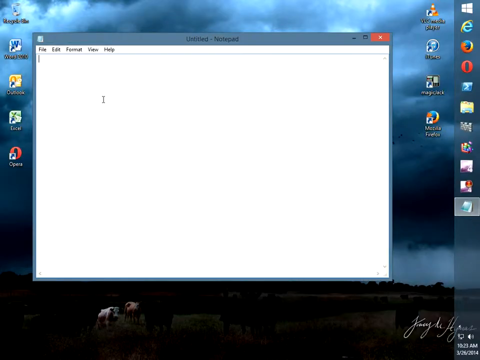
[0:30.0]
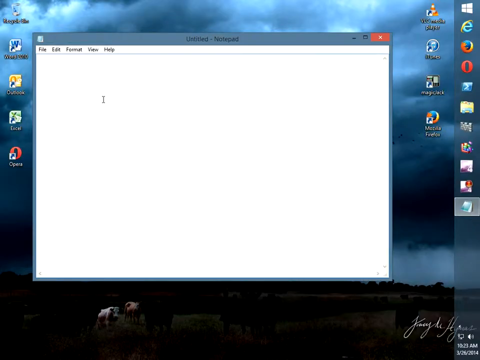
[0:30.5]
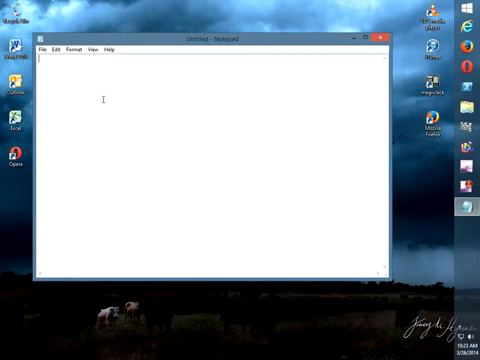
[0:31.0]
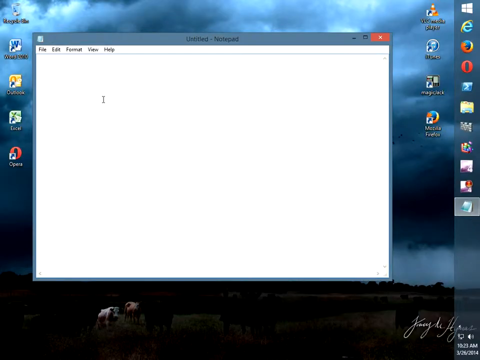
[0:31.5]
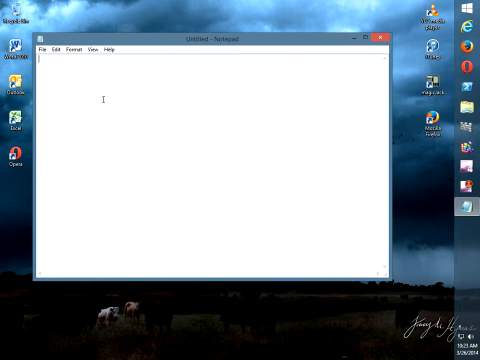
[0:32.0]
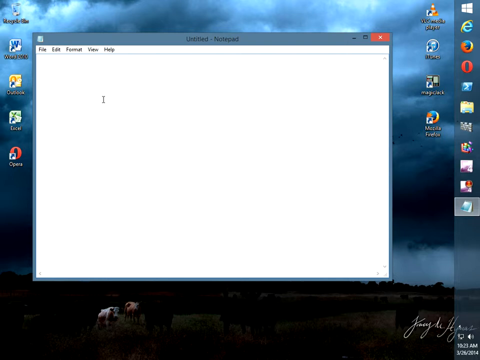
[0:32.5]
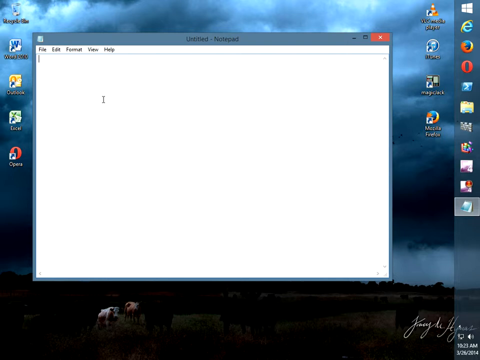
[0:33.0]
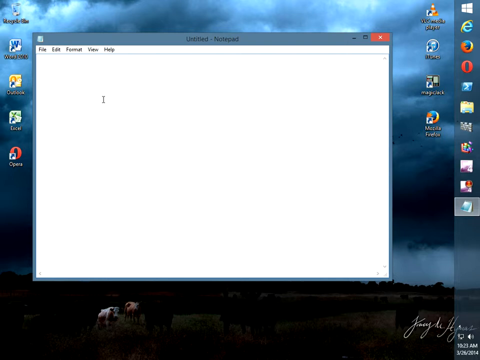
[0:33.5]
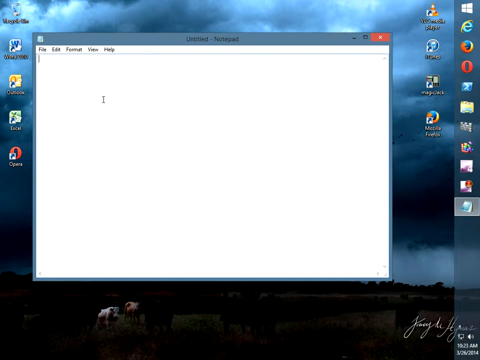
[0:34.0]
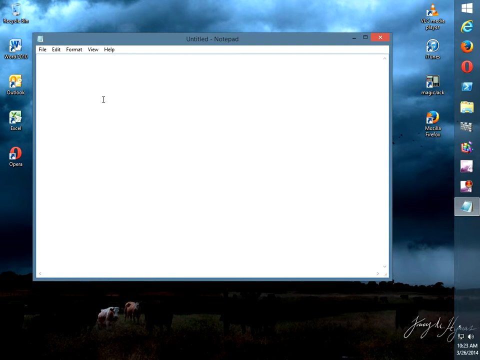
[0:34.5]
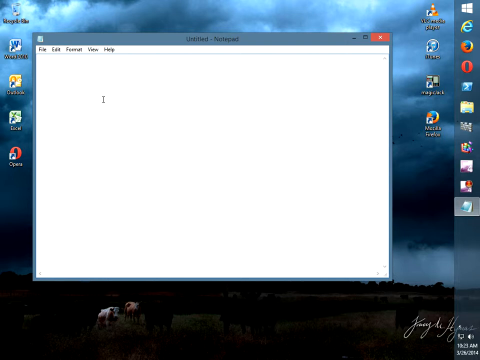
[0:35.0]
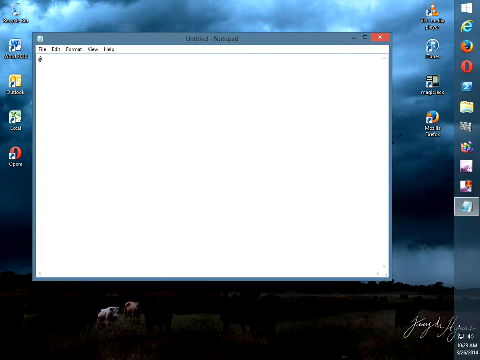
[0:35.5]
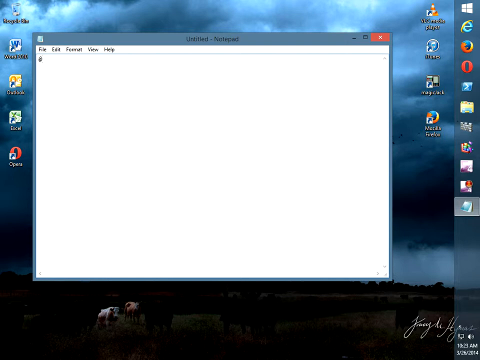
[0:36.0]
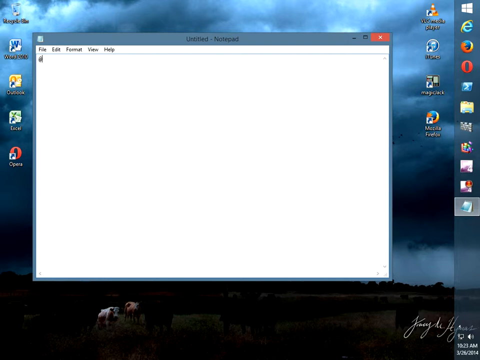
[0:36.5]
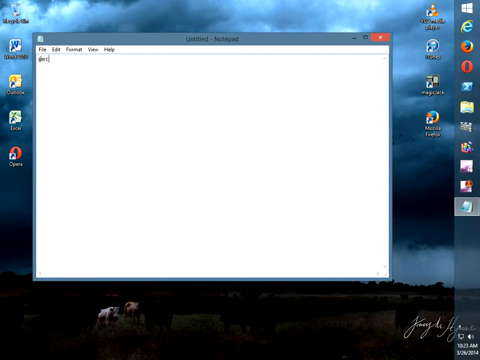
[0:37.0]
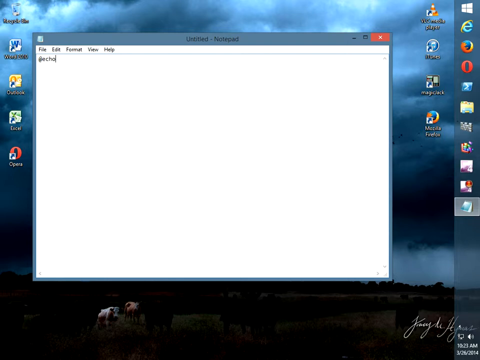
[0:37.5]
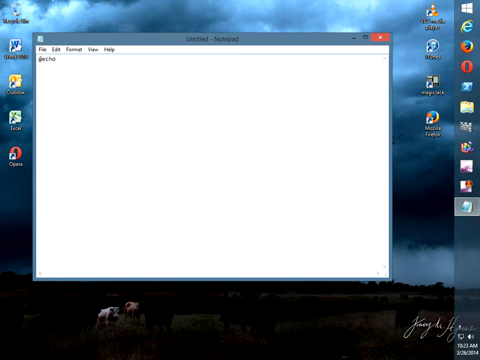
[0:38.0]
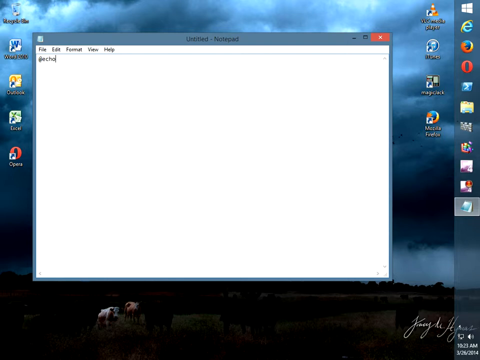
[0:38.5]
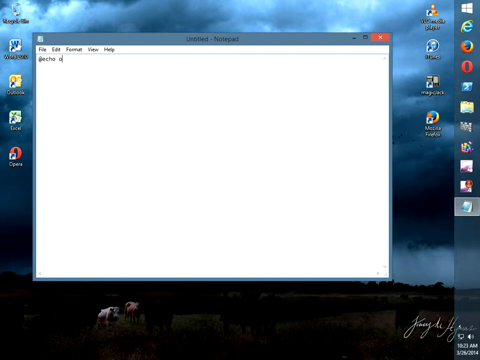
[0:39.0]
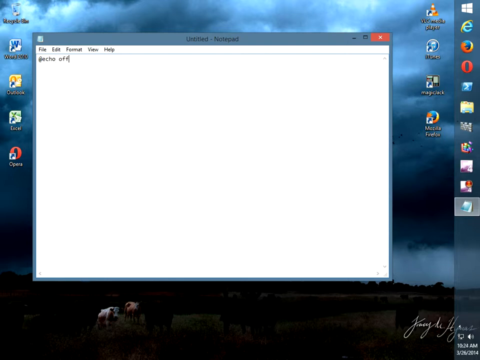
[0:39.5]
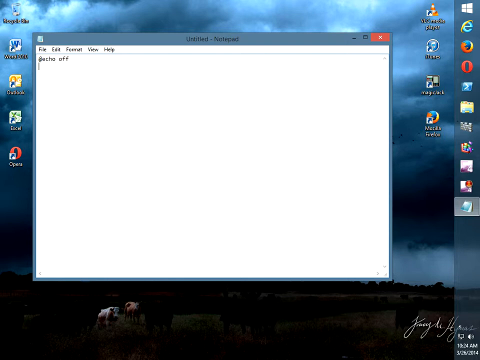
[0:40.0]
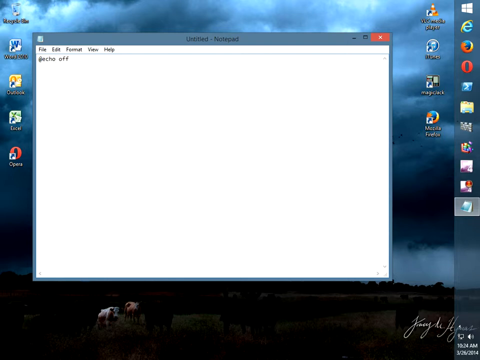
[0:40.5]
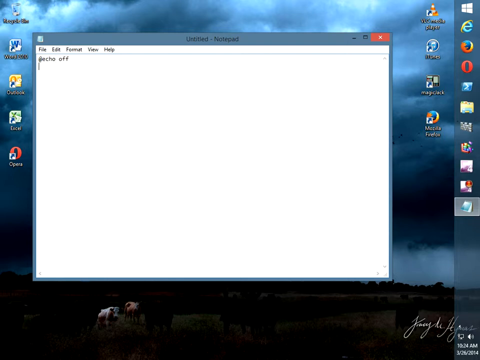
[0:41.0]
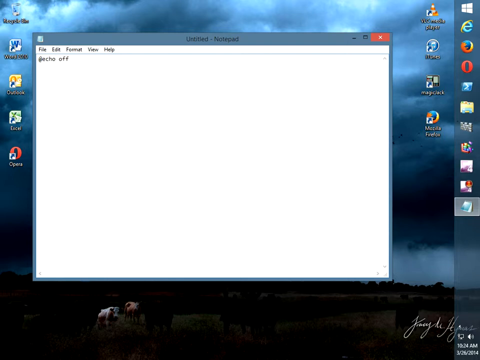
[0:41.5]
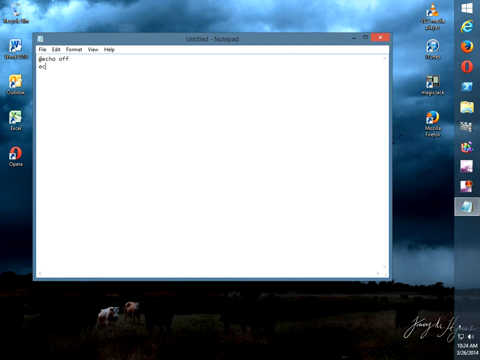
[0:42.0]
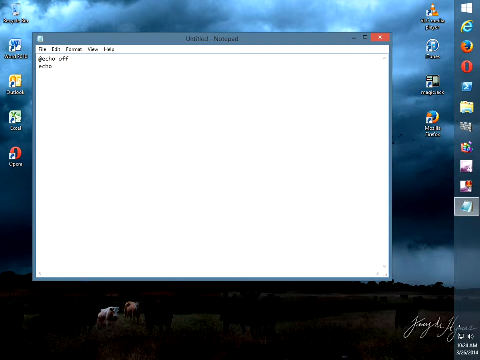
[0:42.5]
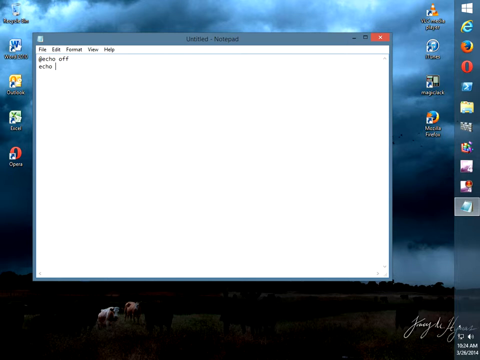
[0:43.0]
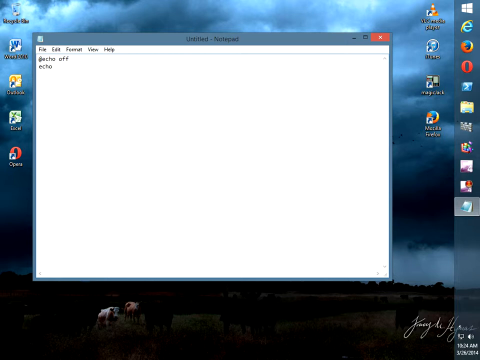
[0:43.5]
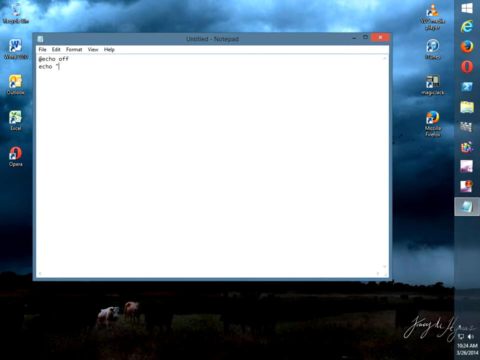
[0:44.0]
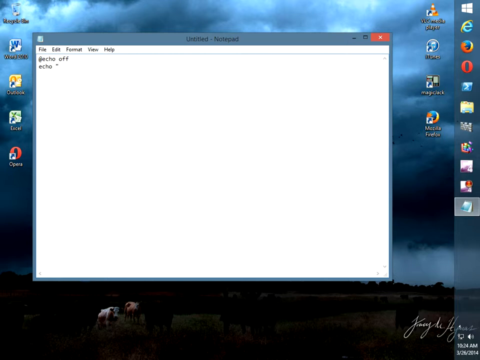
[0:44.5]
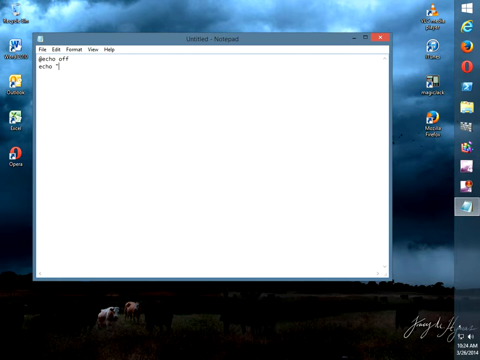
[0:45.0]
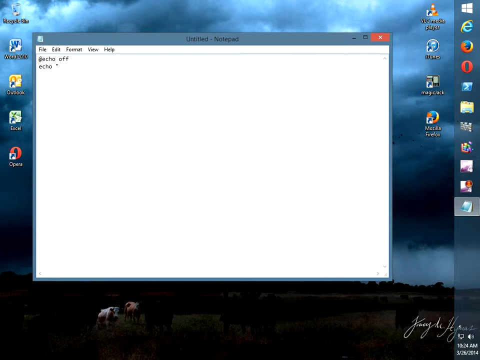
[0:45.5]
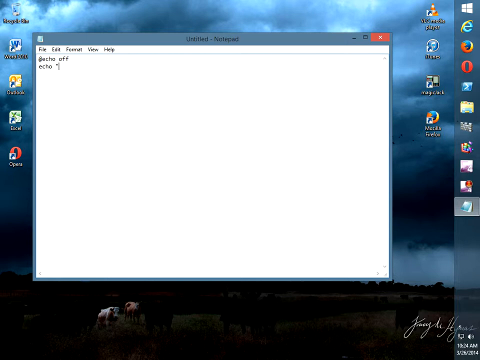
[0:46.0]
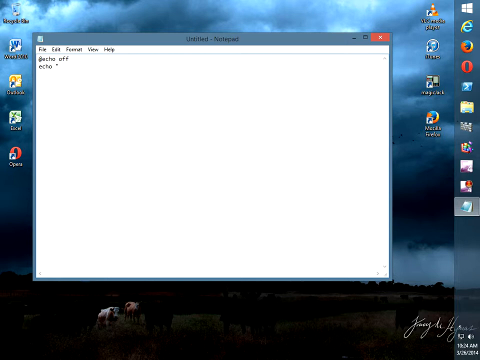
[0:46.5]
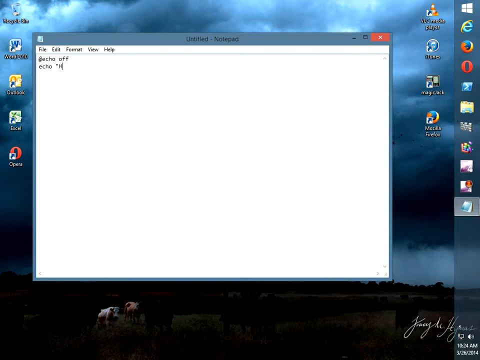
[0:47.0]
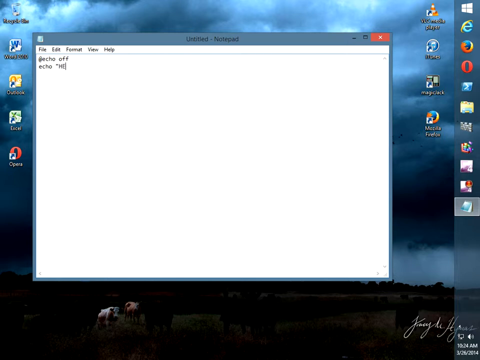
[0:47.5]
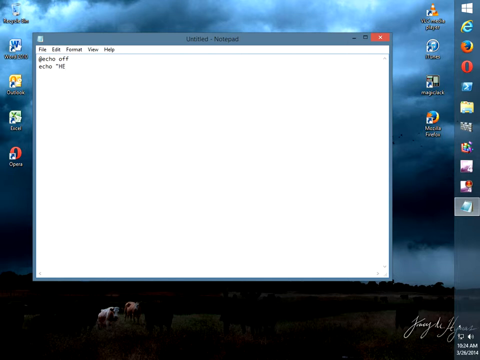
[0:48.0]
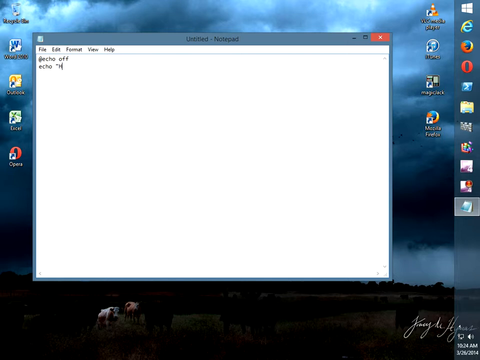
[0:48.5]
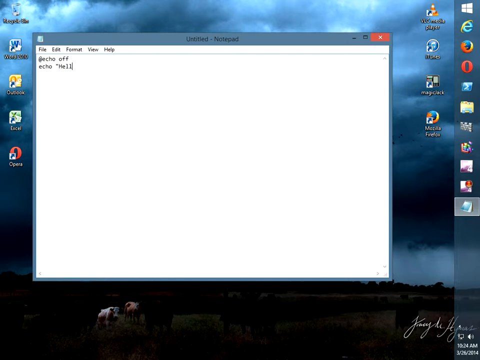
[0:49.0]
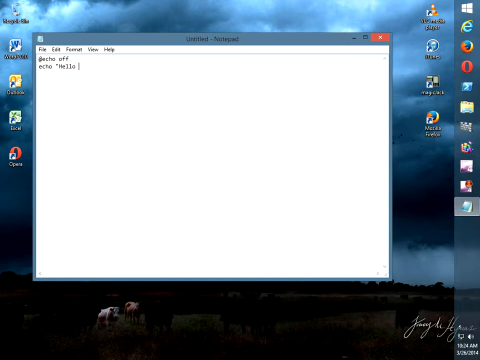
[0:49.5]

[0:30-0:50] The untitled Notepad window is open, with a flashing icon in the upper left. Text is typed: "@echo off" on the first line, then on the next line "echo", an open quote, and "Hello" with a capital H, followed by "Wo" with a capital W, apparently the start of the word "world".